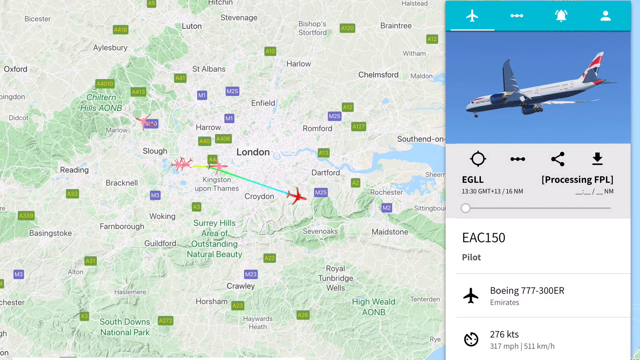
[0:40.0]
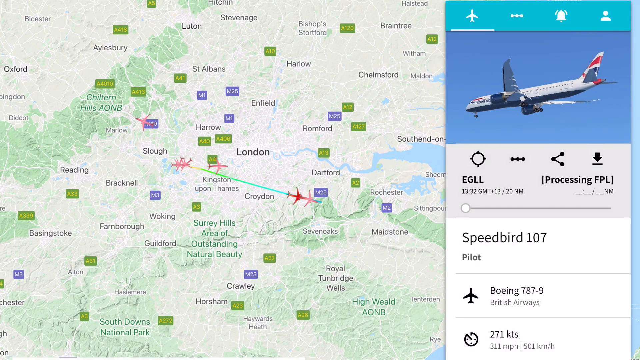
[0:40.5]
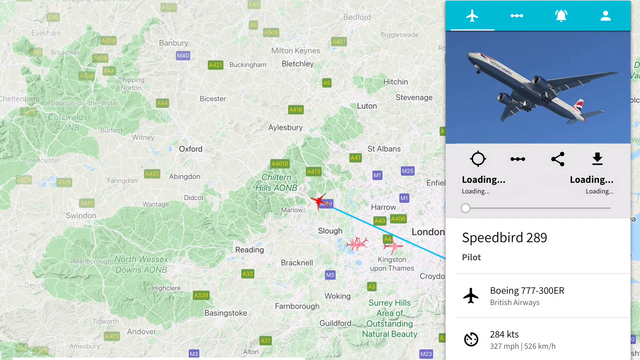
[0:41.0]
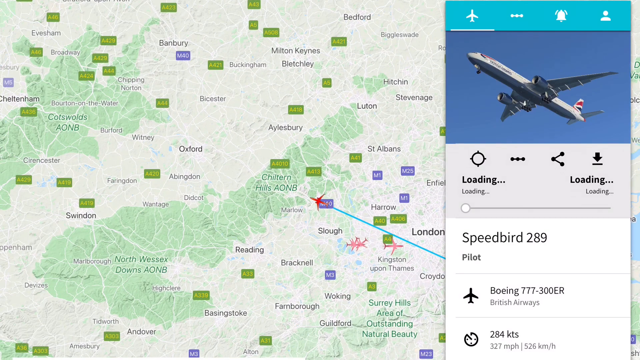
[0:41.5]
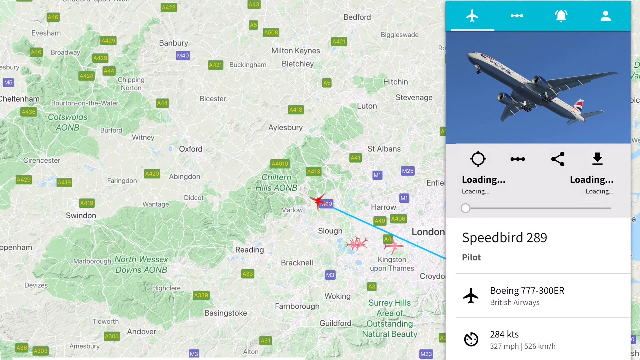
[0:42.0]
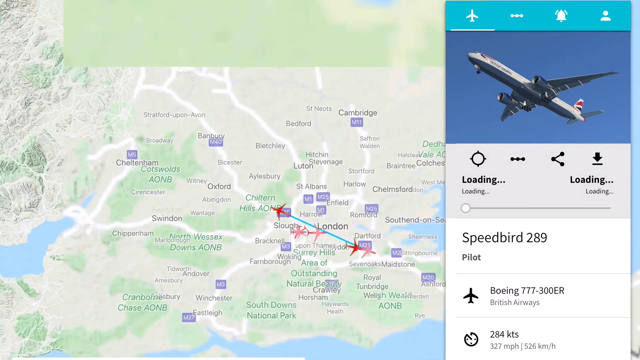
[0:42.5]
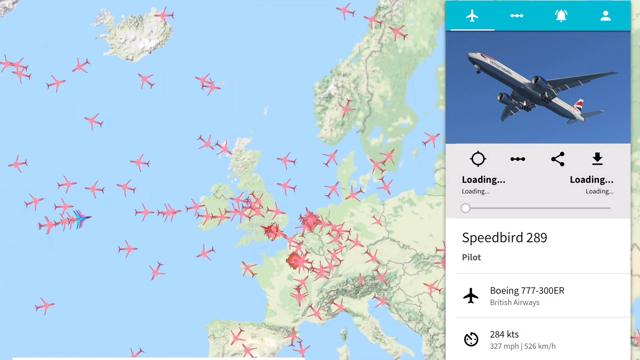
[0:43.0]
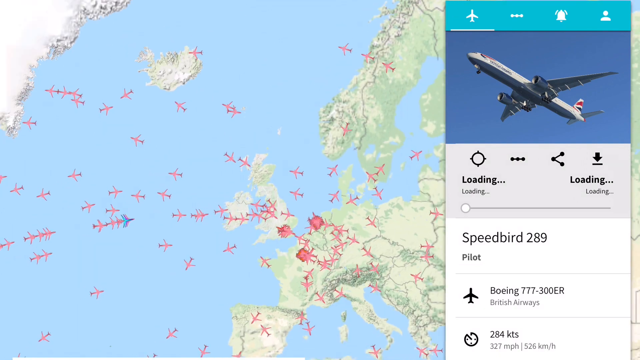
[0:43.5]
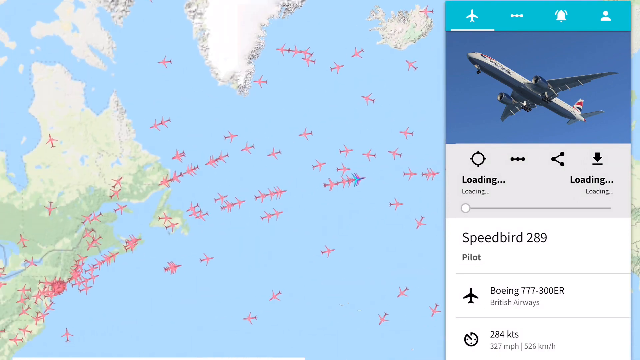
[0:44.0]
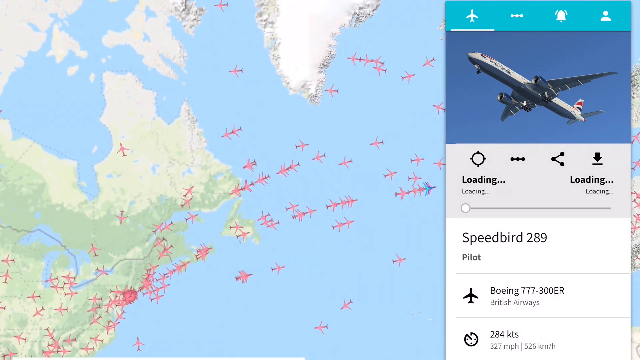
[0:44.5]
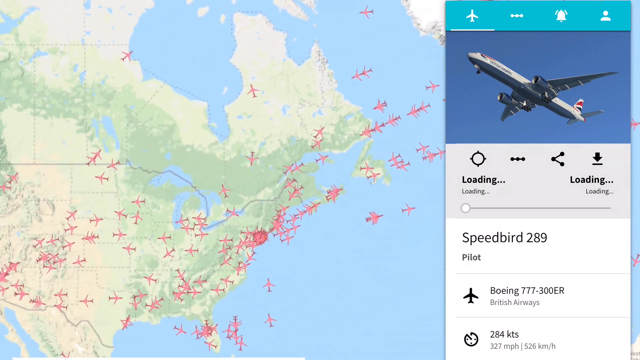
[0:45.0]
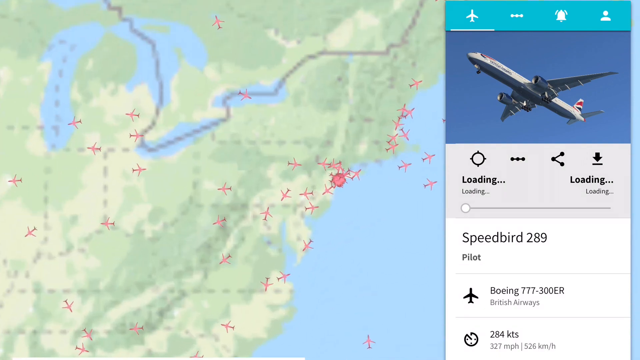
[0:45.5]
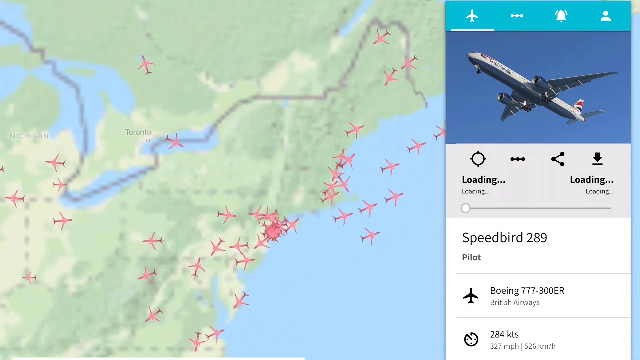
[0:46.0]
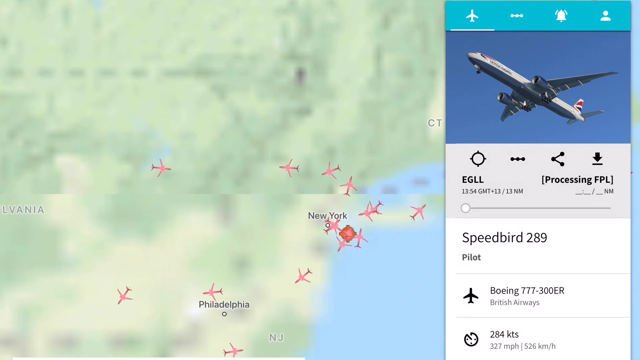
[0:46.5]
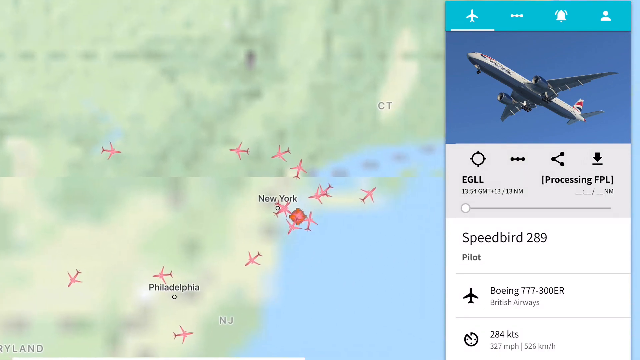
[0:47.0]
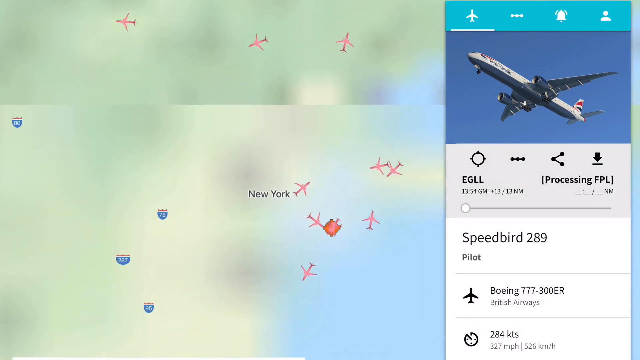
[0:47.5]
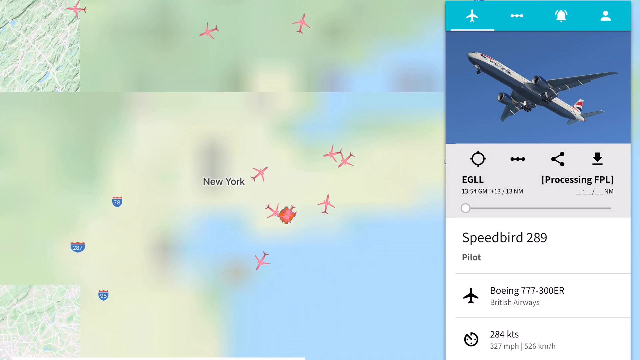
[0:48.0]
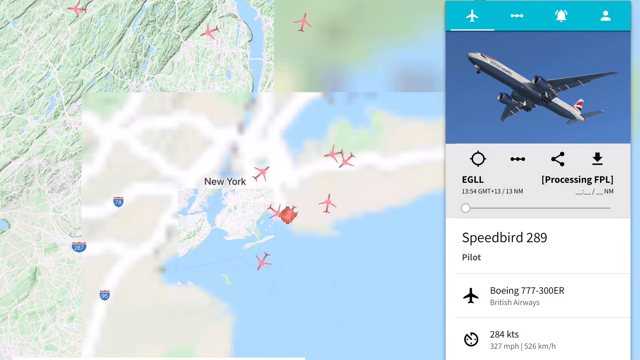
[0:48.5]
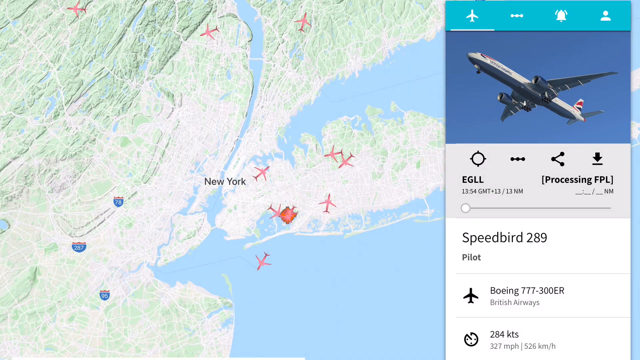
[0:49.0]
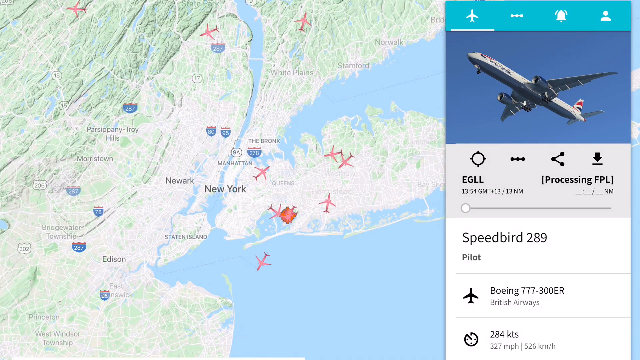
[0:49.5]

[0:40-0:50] The flight tracker app is on the left part of the screen, showing several aircraft over the London area. The selected flight being tracked is shown in bright red, and its information appears on the right part of the screen: EAC-150, a Boeing 777, with an image of the aircraft flying in the sky. The display cycles to another image, of Speedbird 289, also a Boeing 777, shown in the sky. The app then zooms out to show dozens of flights all over the world, and then zooms in closer on flights over the New York area.